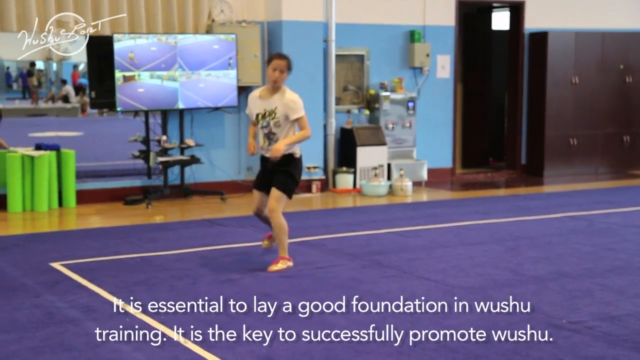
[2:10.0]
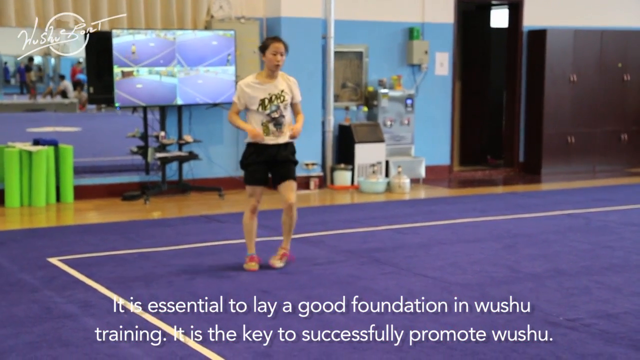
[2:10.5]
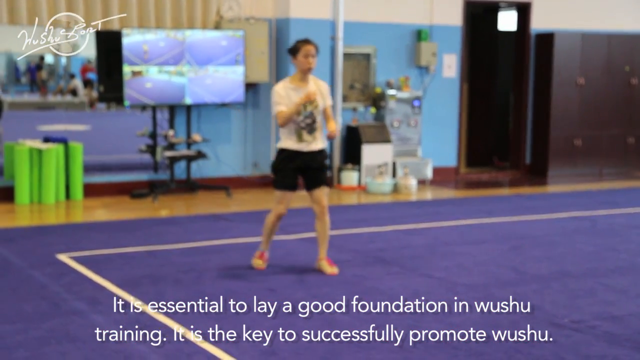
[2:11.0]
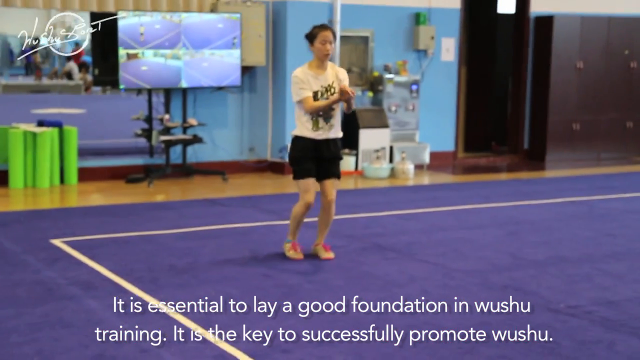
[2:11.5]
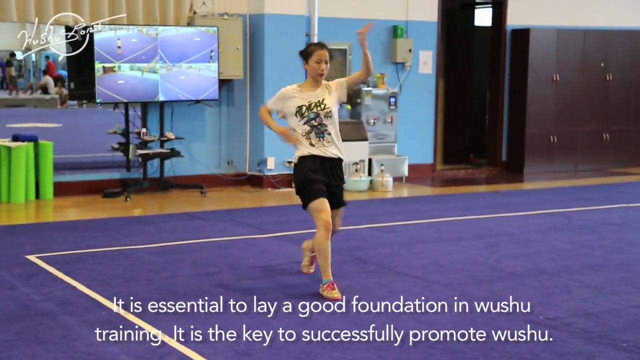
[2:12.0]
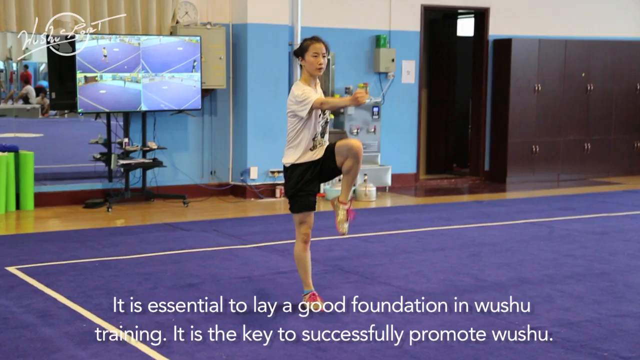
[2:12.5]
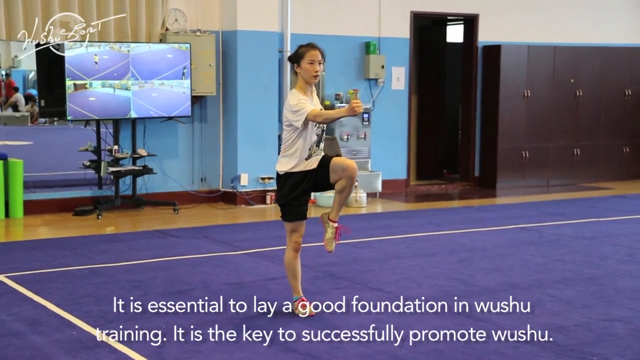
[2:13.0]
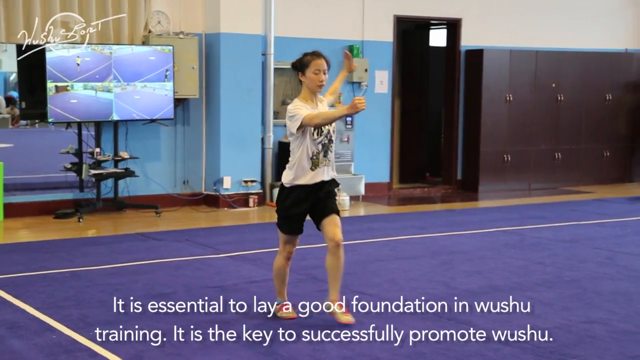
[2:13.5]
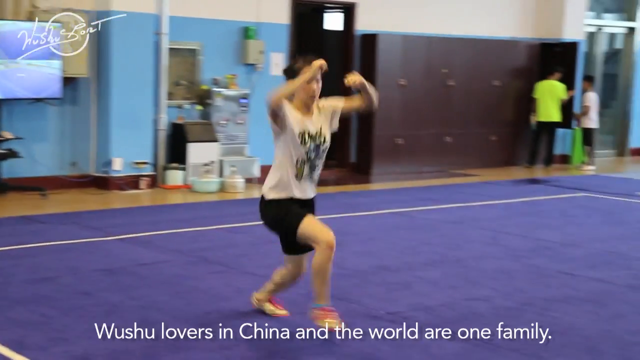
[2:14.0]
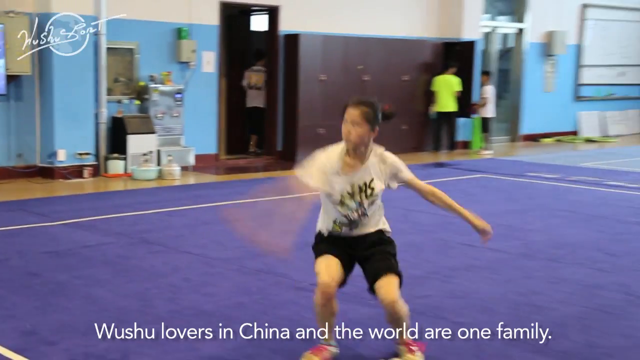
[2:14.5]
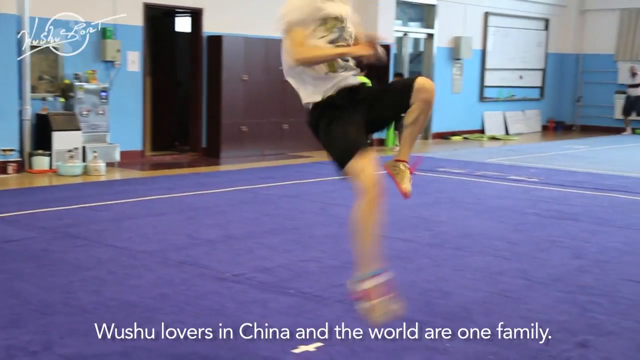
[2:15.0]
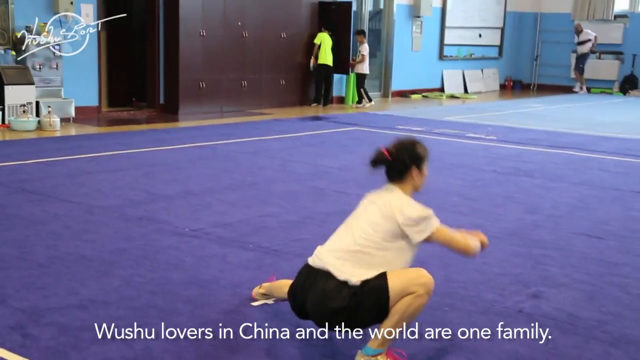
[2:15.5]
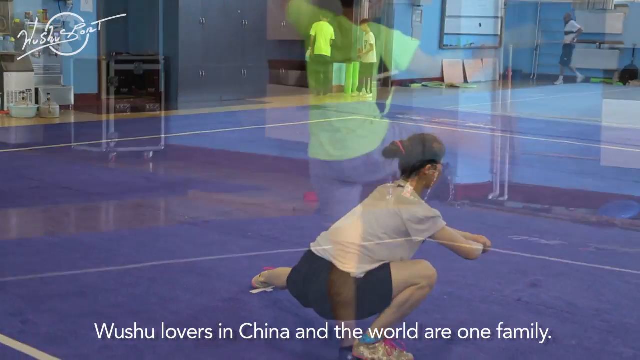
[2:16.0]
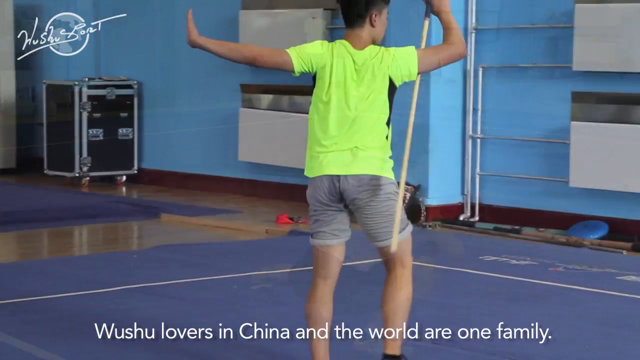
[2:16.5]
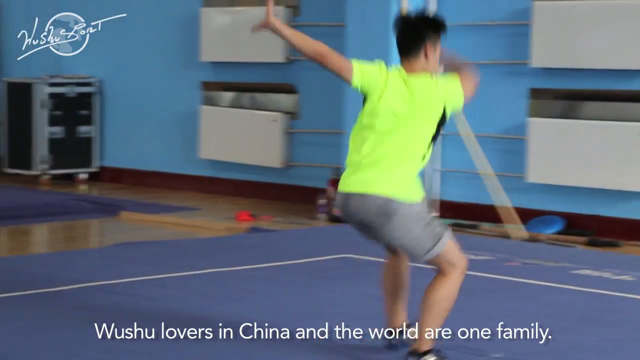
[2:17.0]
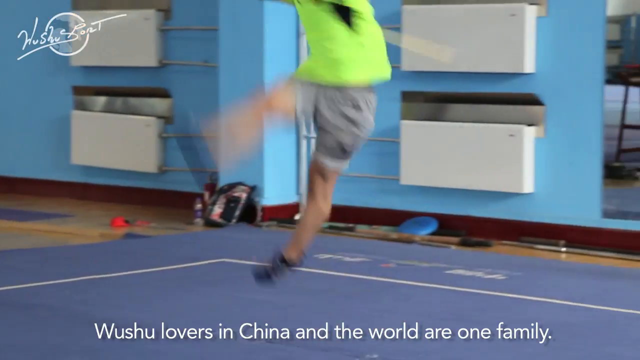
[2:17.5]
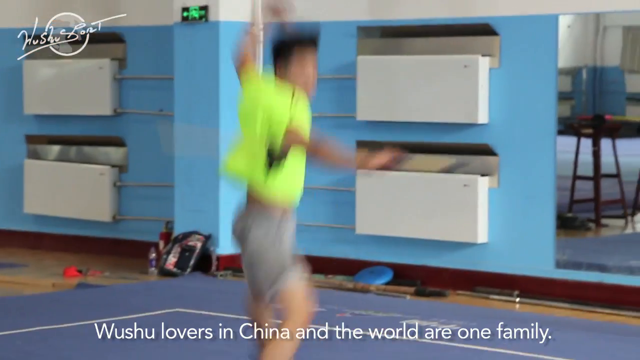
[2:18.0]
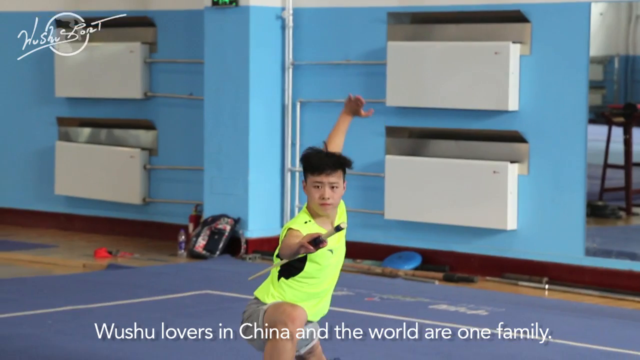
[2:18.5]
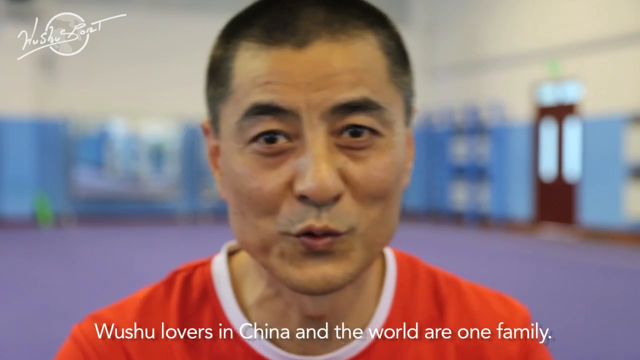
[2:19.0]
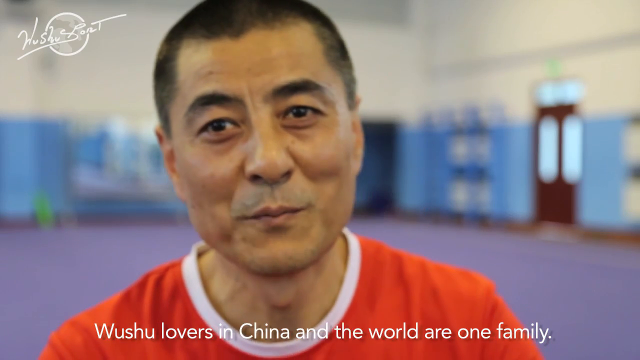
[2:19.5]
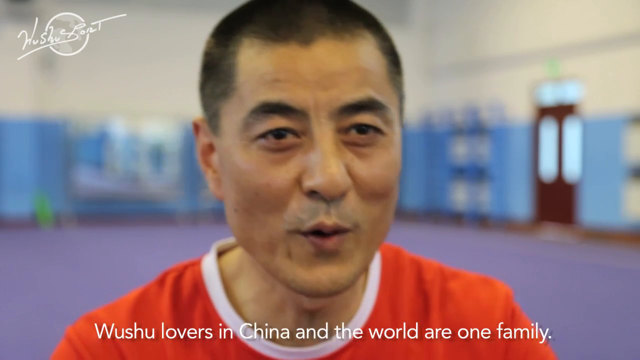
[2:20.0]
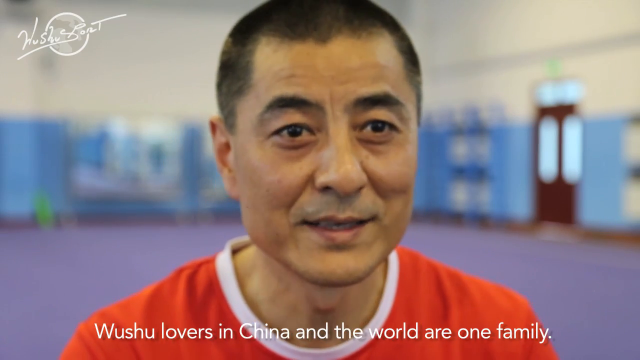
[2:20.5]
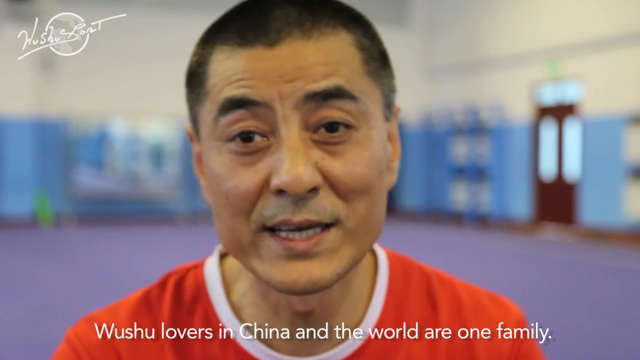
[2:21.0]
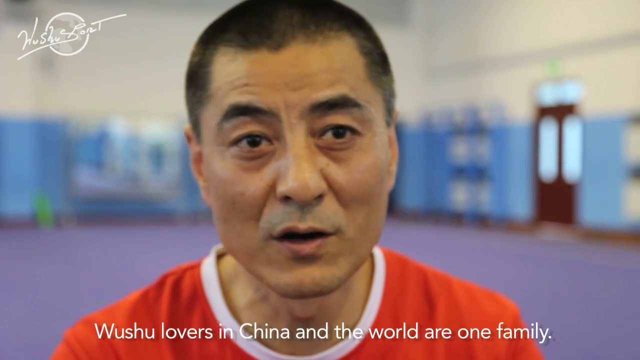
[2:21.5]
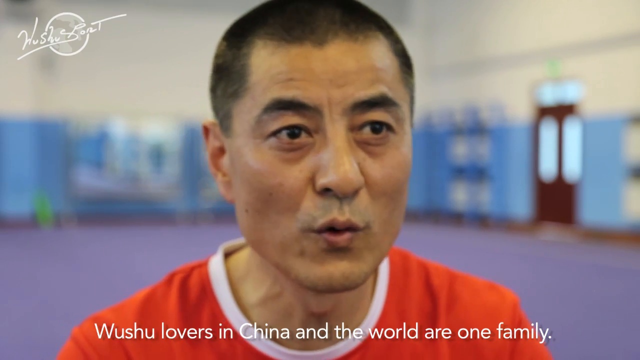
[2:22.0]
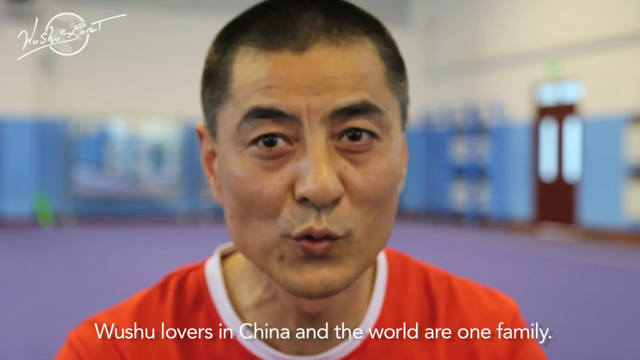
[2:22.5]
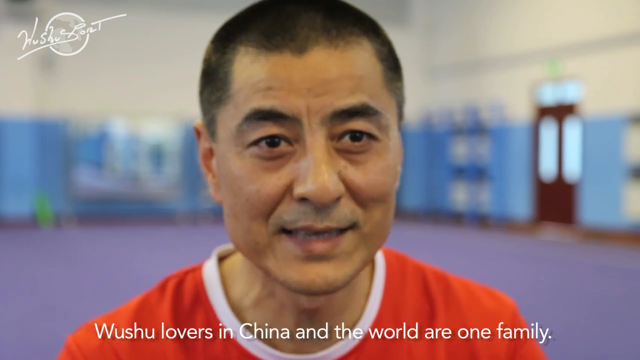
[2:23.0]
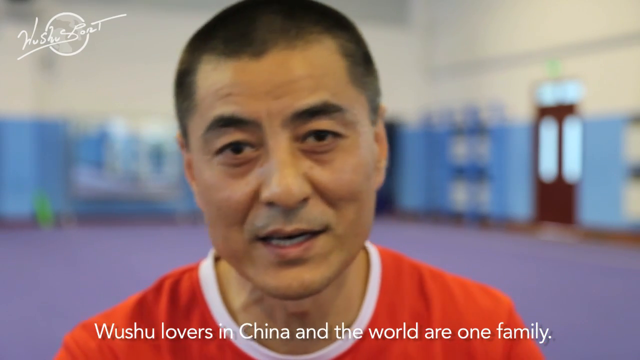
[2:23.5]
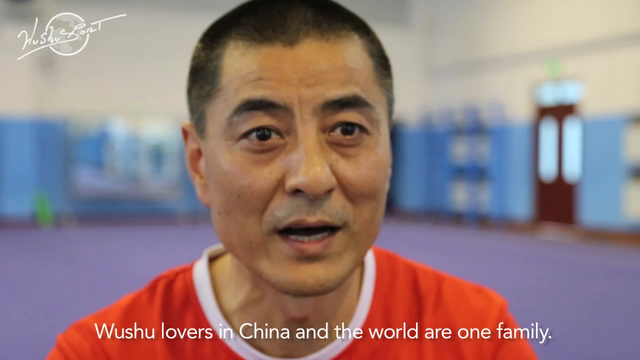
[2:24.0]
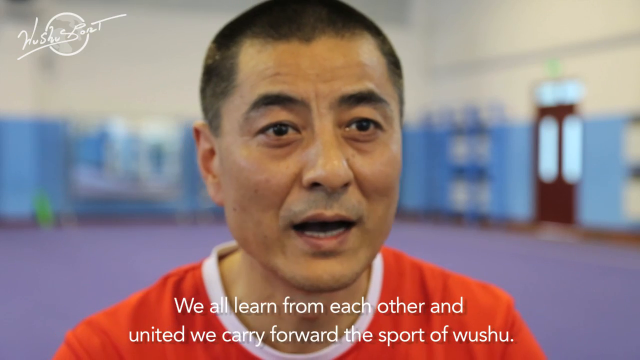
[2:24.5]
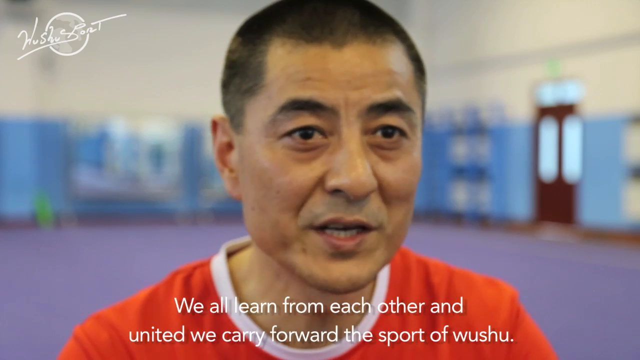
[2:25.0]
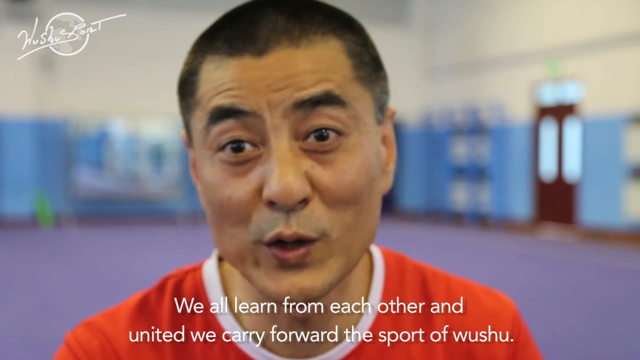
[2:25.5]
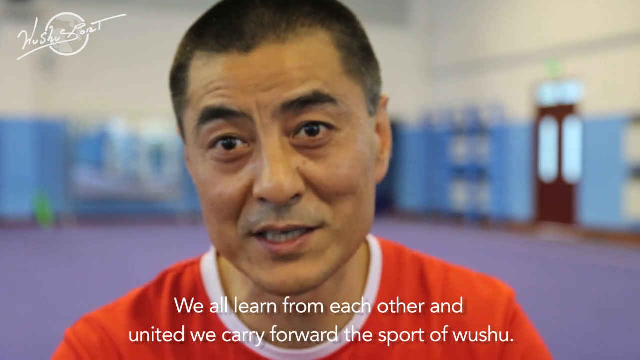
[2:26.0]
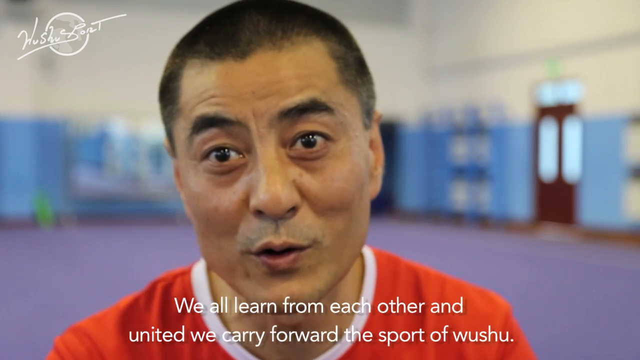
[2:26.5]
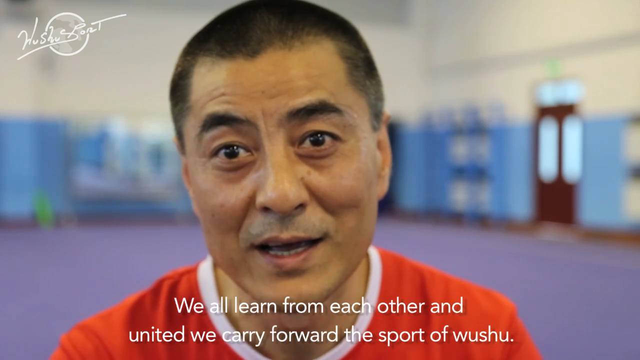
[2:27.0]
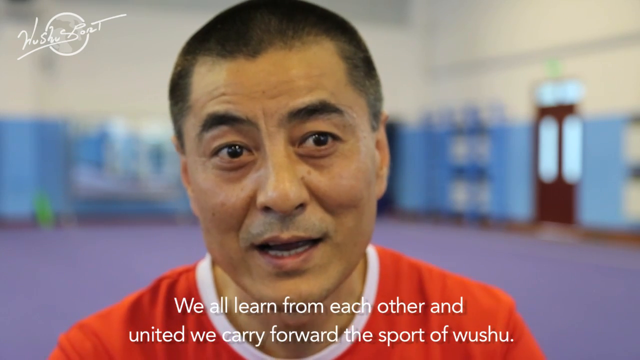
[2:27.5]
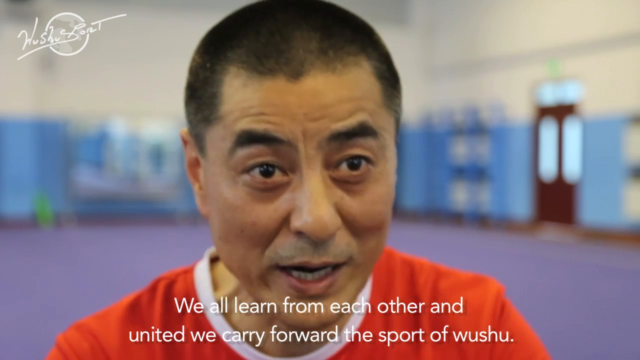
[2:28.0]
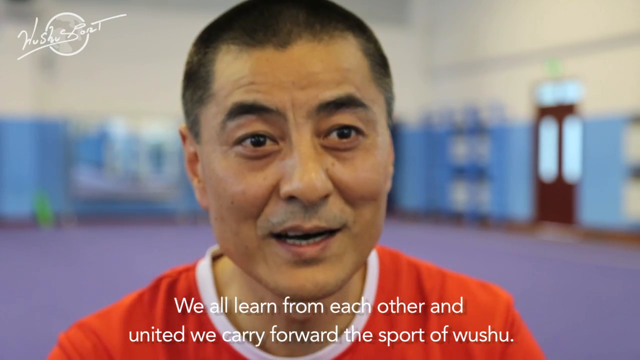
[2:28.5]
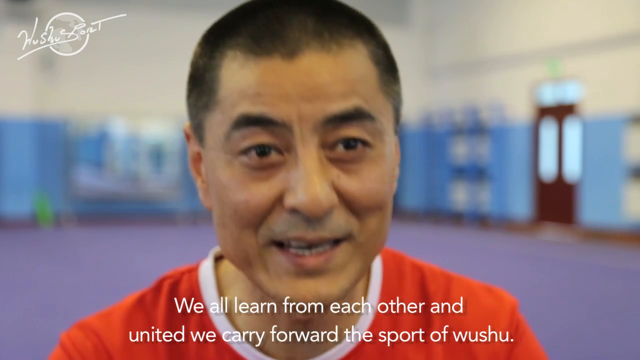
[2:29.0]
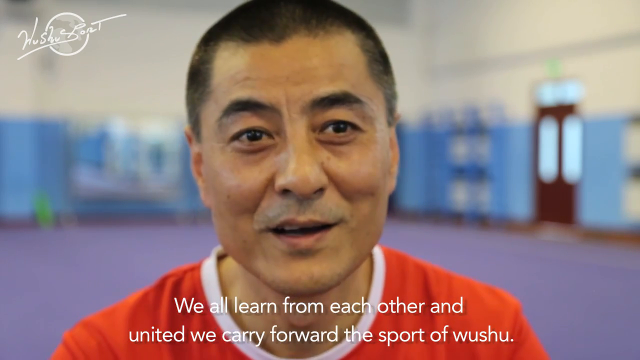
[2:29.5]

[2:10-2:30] A girl in a short-sleeved white shirt and black shorts stands on a purple mat in a room with walls white on the top half and blue on the bottom half. Behind her is a large screen showing four smaller screens on the monitor. She takes steps, hiking her knees up to her chest and sticking her arms out forward, then takes a few quick steps, runs, jumps up in the air, spins, lands and crouches down. A boy in a fluorescent green shirt and gray shorts does the same thing. The video then cuts to a man with short black hair in a red shirt with a white collar speaking directly into the camera, with the blue and white walls and a purple mat behind him.